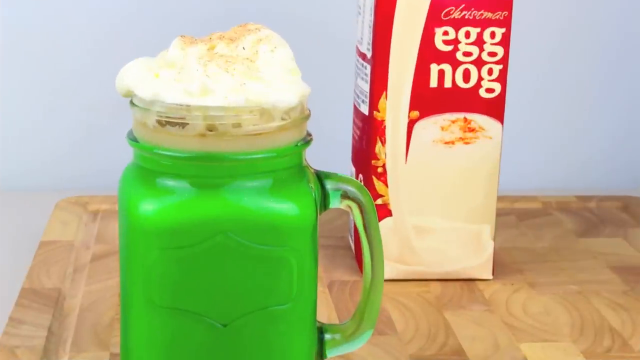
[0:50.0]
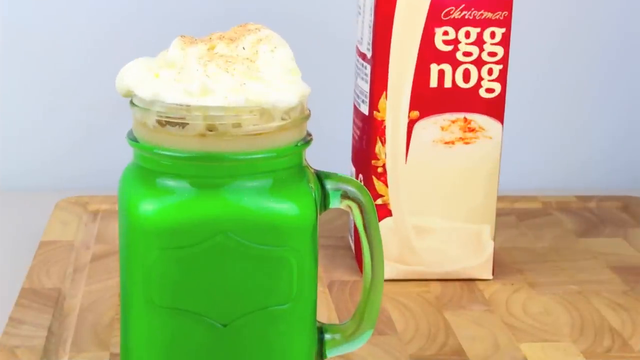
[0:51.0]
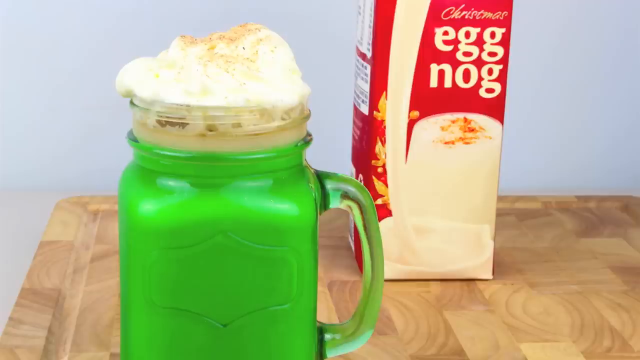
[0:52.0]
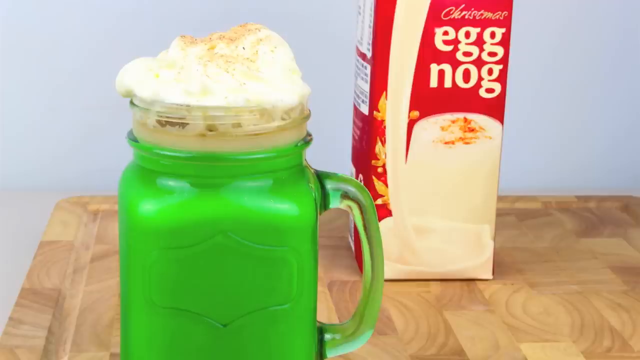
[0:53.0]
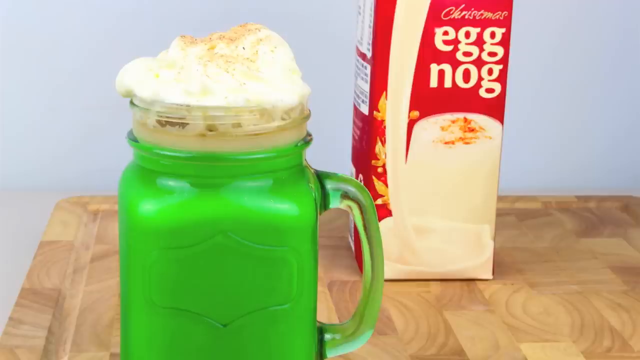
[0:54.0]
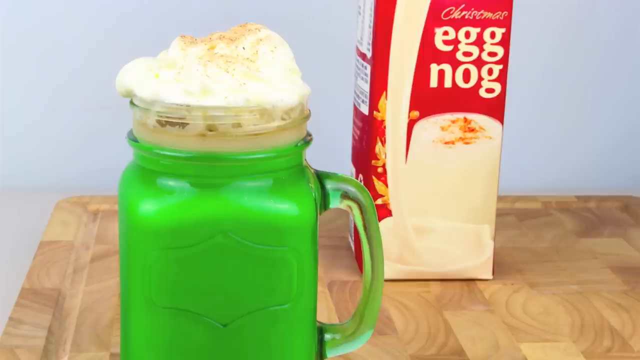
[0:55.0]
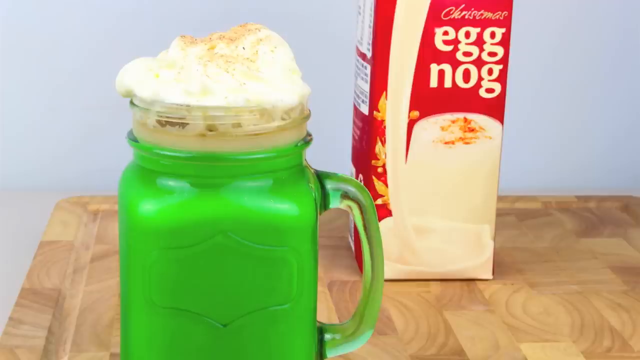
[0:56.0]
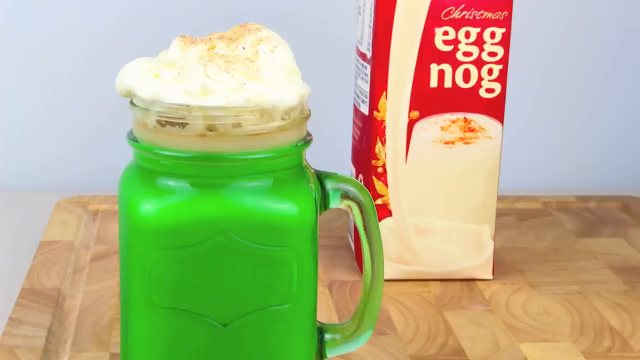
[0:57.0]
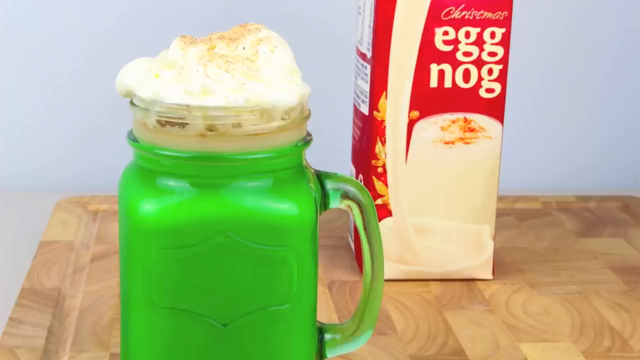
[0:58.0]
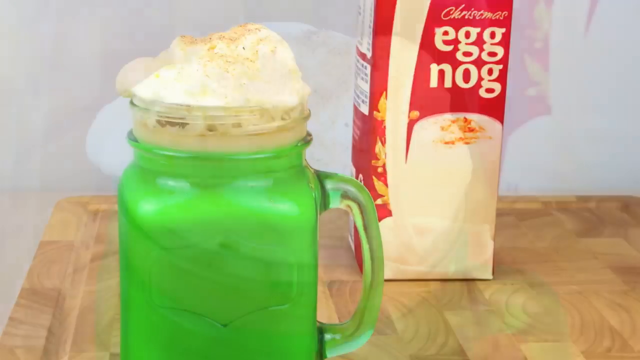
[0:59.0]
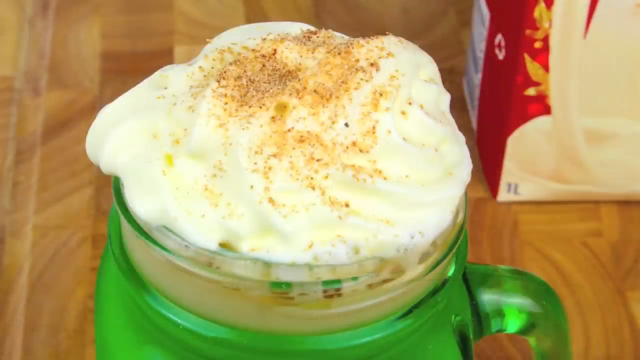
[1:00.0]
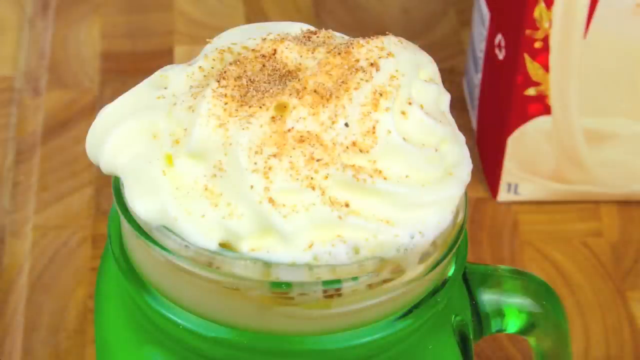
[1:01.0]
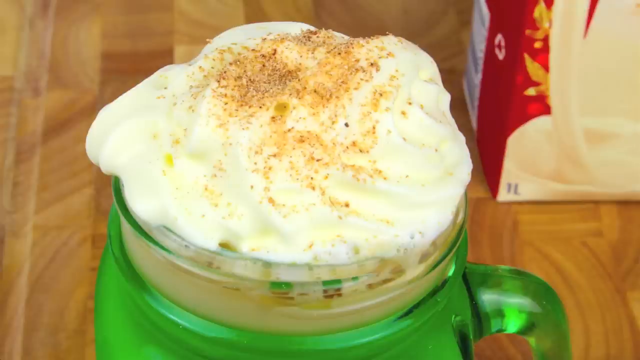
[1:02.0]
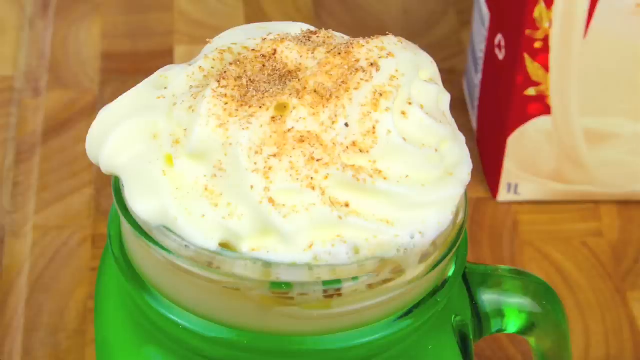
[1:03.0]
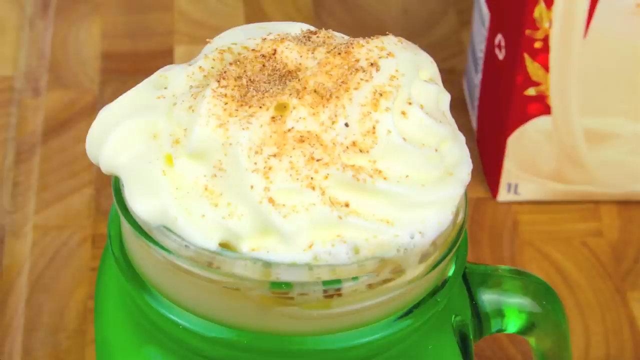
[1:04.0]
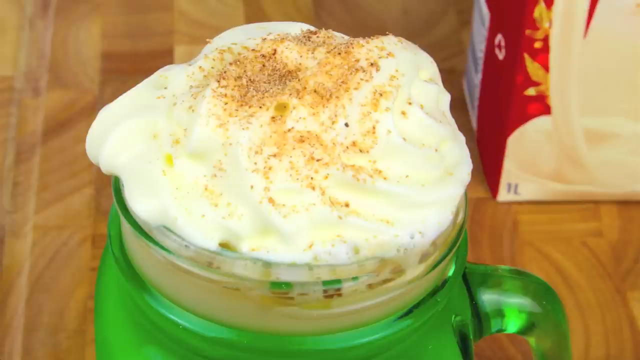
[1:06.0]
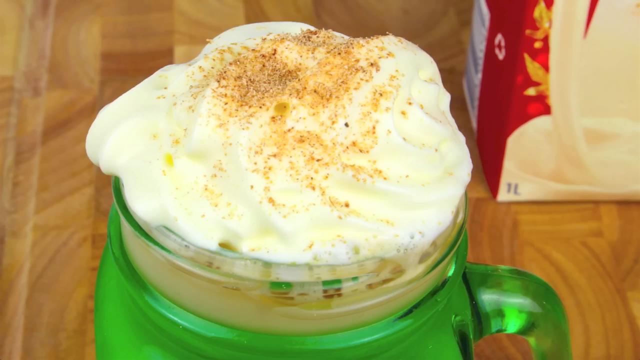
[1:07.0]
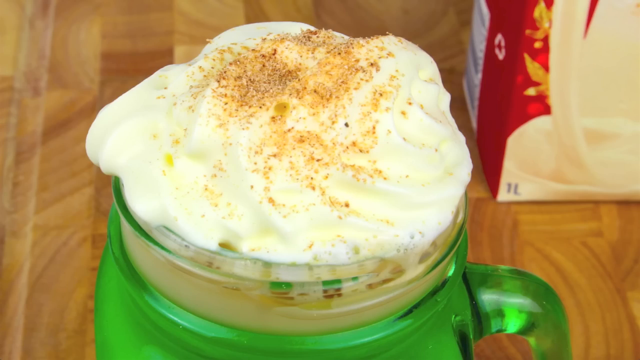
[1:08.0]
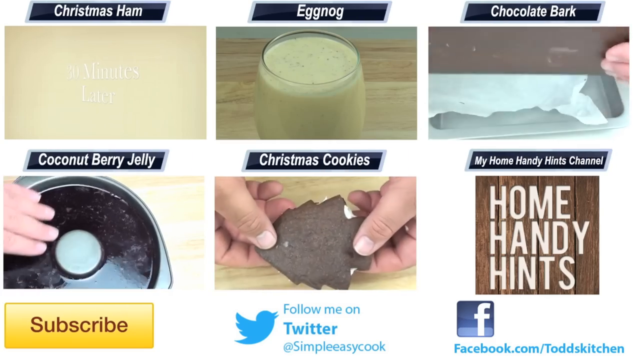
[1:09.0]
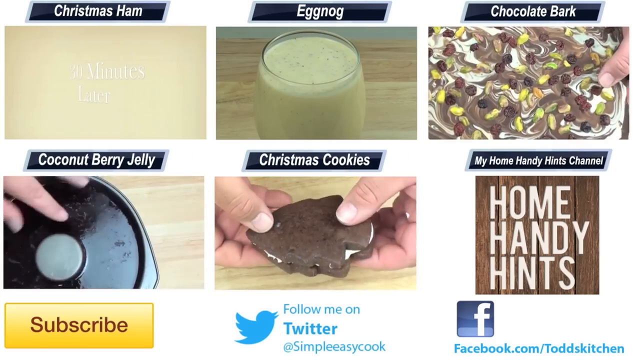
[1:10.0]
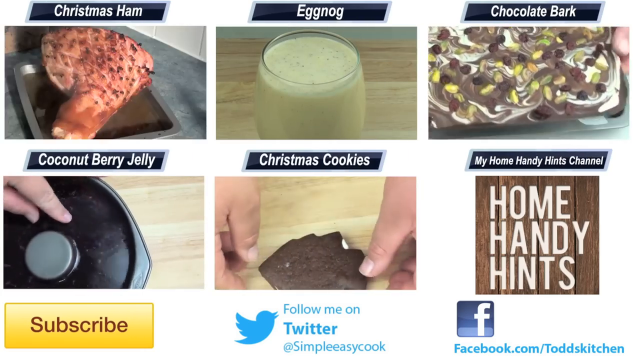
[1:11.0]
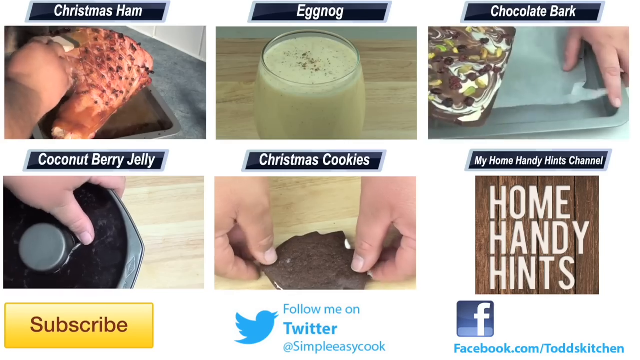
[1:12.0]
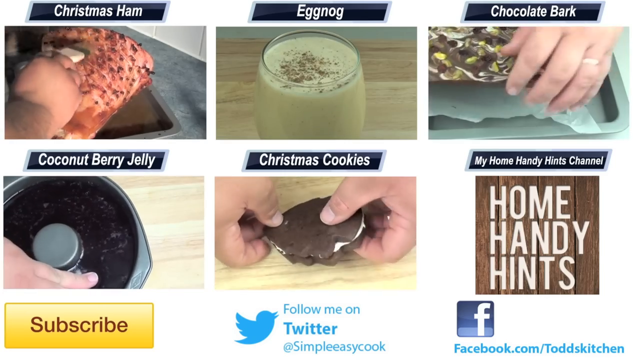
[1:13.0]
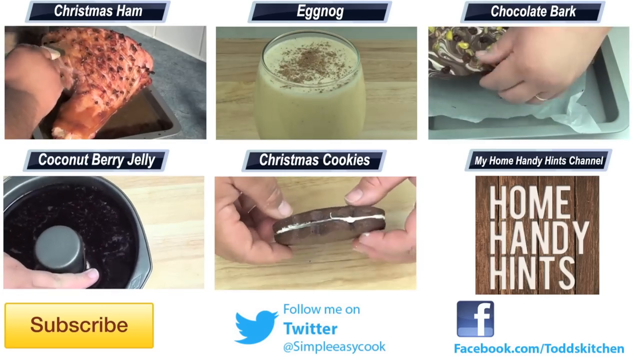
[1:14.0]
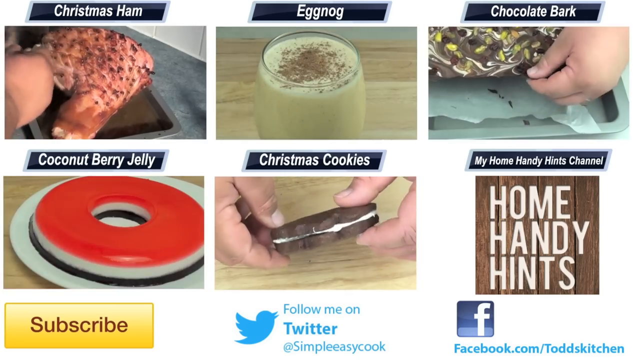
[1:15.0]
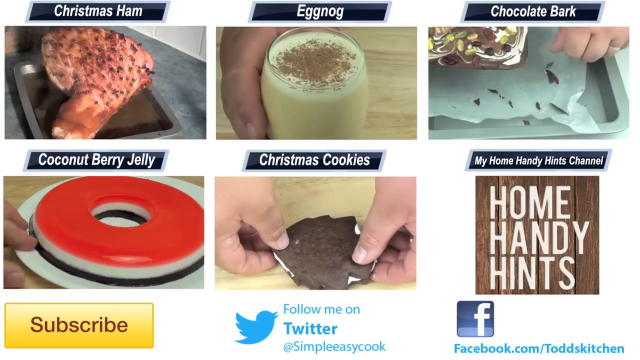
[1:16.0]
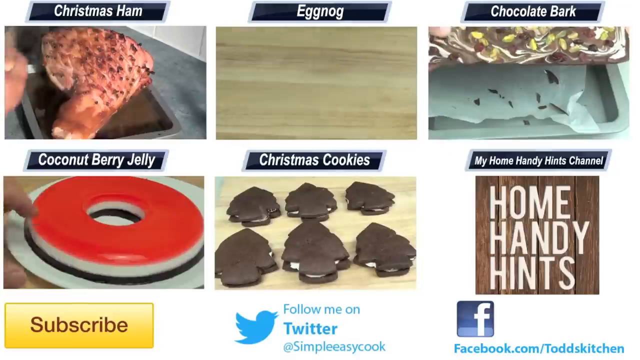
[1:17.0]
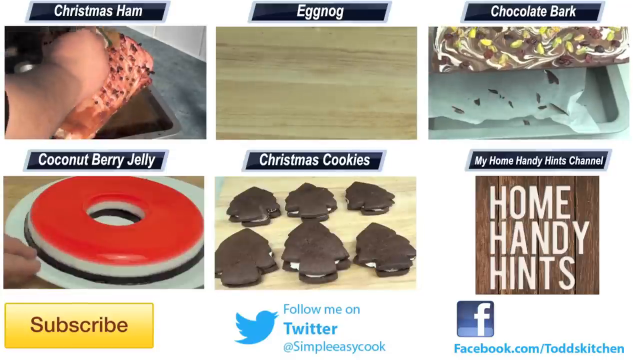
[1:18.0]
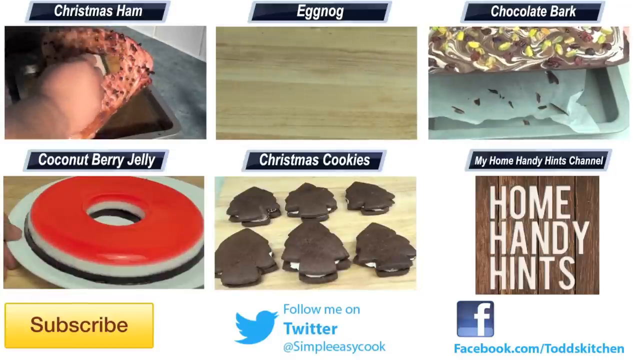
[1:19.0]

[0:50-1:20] Two items stand on the butcher block table, seen from slightly above in a frame angled a bit downward. Occupying roughly the left half of the image is the mason jar-type glass with a handle, holding all the added ingredients plus whipped cream and a sprinkle of cinnamon. To its right, set back a little on the table, is a carton of Christmas eggnog, mostly red and white. The carton shows a white liquid being poured into a cup near its bottom and, near its top, a filled glass holding a drink not unlike the one Todd has just prepared. Through the clear glass with the handle, Todd's drink is visibly green. A still close-up then shows the foamy whipped cream top of the drink from above. Next, home handy hints appear on the screen, with text identifying their subjects as Christmas ham, eggnog, chocolate bark, coconut berry jelly and Christmas cookies, and advertising Todd's home handy hints channel.